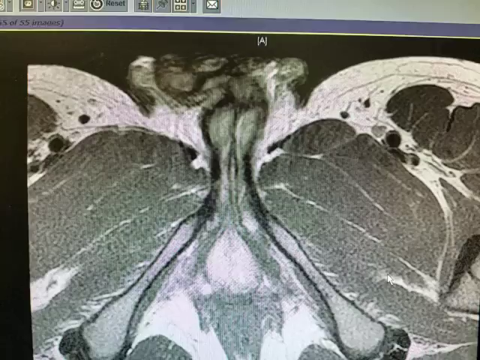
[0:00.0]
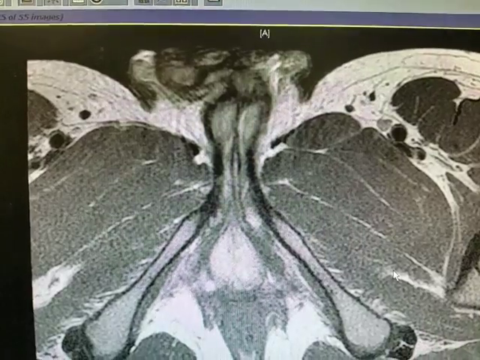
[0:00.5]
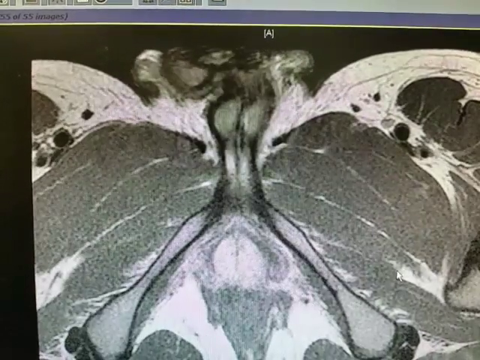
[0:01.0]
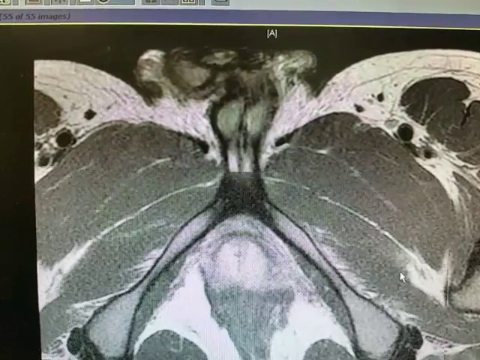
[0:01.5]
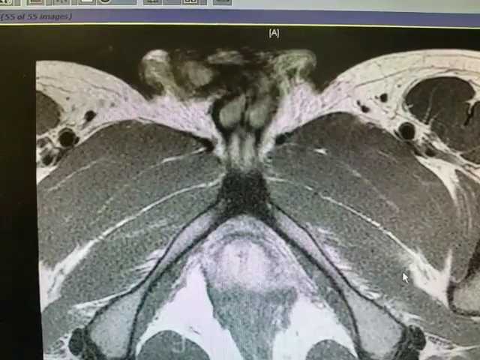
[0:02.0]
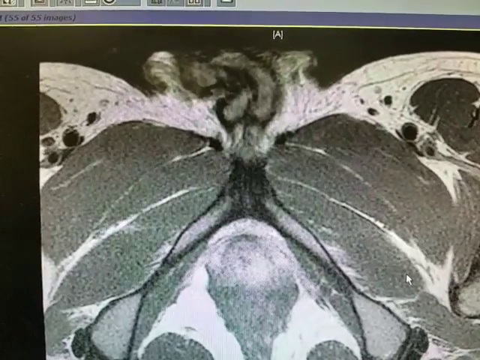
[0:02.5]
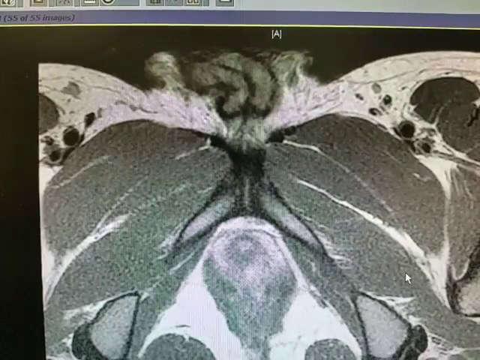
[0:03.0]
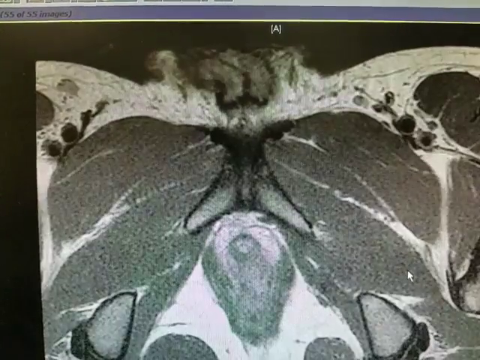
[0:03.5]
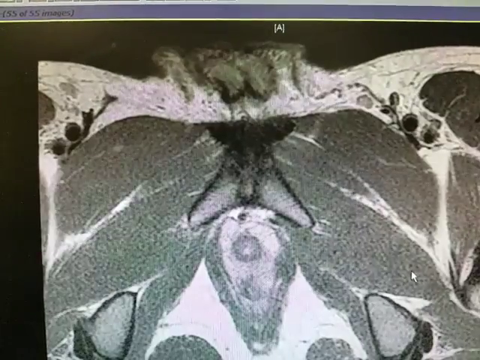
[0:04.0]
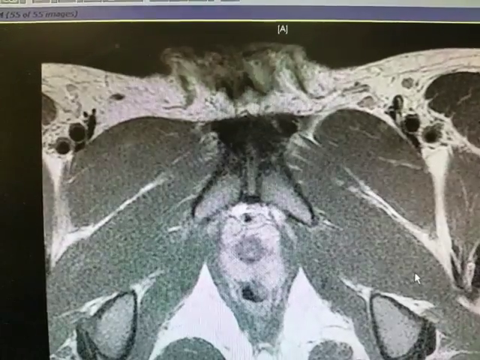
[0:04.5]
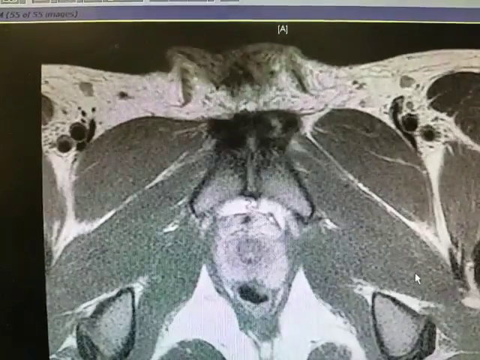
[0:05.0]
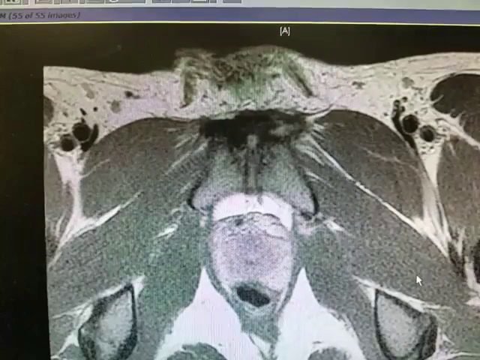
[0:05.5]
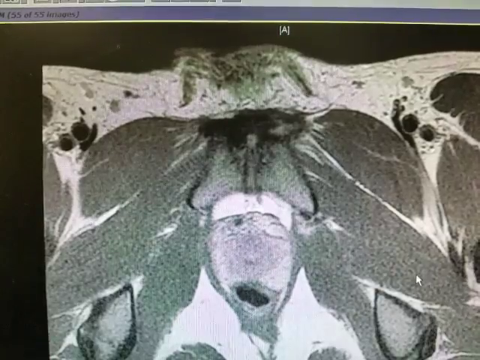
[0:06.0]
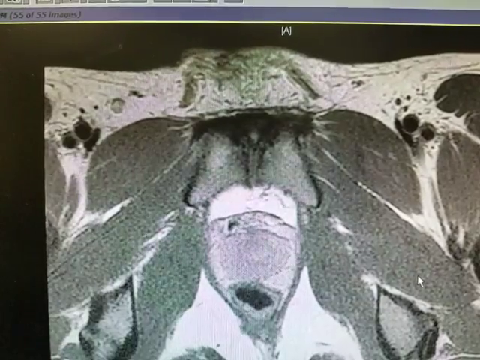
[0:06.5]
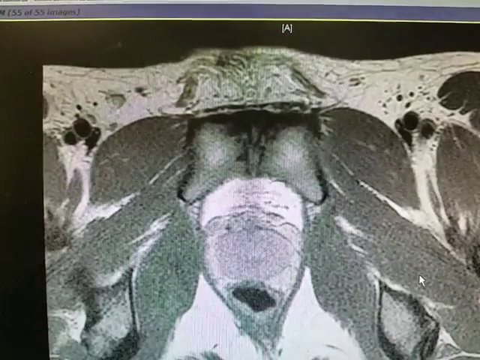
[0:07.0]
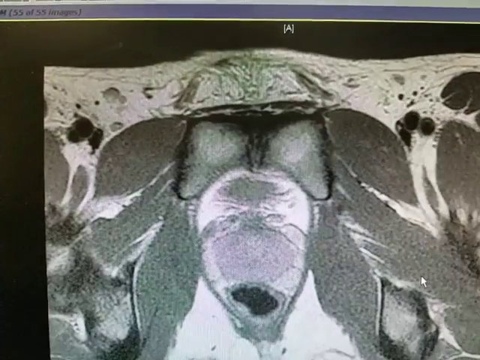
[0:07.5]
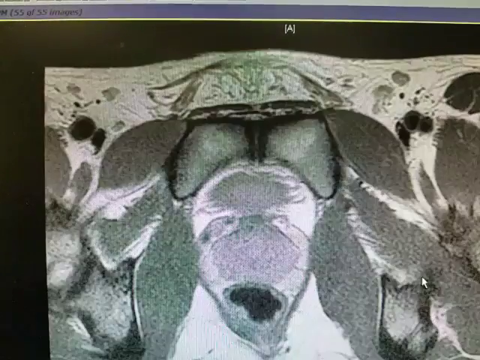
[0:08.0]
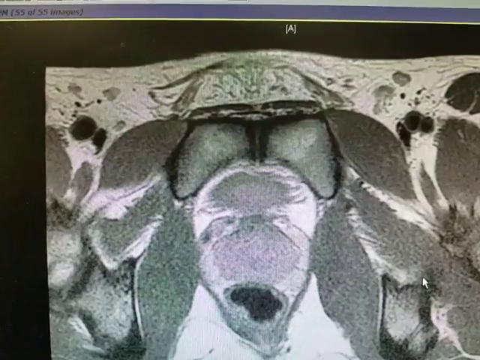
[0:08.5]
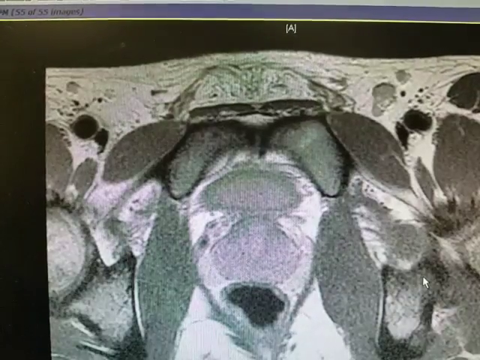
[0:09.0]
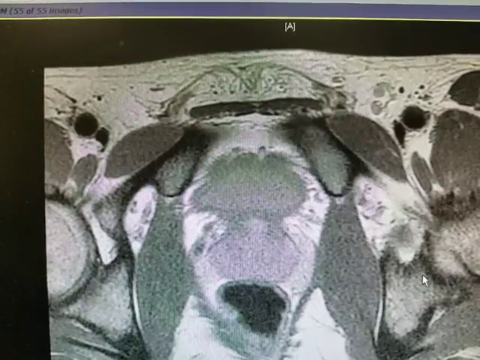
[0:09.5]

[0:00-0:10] Some type of medical imaging is shown, possibly an MRI or a CT scan. It is not an X-ray, as bones are not really visible in the image. There appear to be organs in the images. The top left corner reads "55 of 55 images." The images change, apparently showing changes occurring within the body. The organs, or whatever they may be, move drastically and almost get compressed together, which looks abnormal. The images are in black and white, and the video is evidently being taken of a screen.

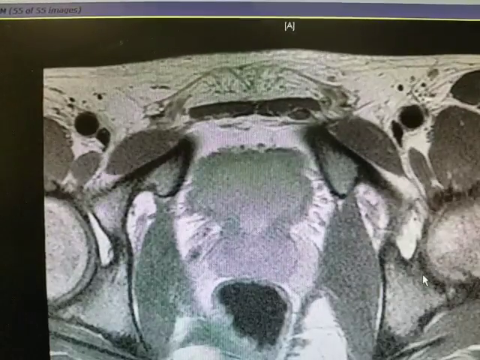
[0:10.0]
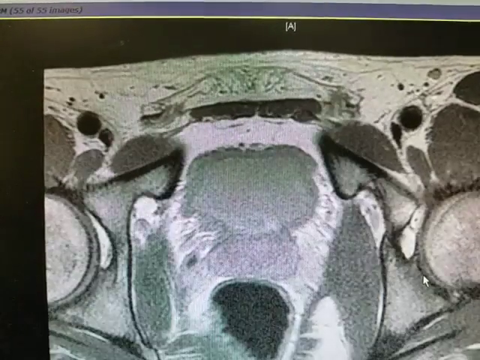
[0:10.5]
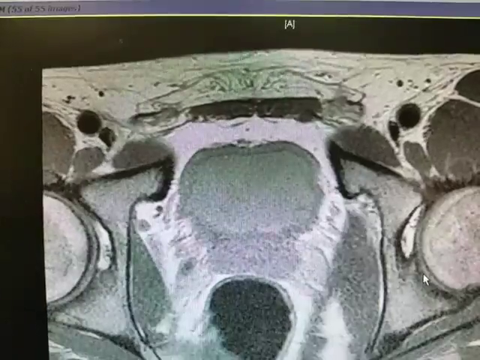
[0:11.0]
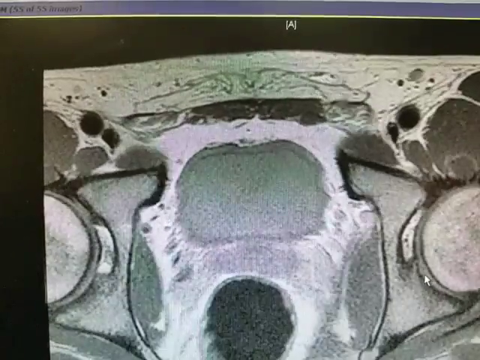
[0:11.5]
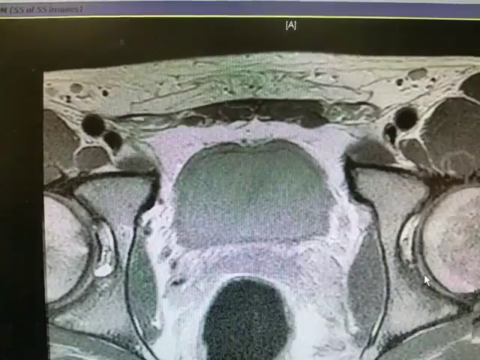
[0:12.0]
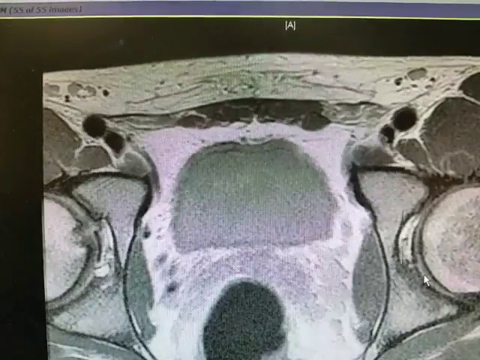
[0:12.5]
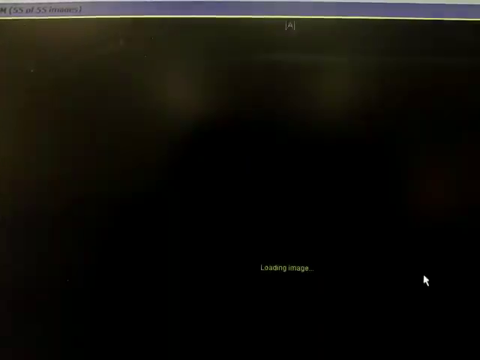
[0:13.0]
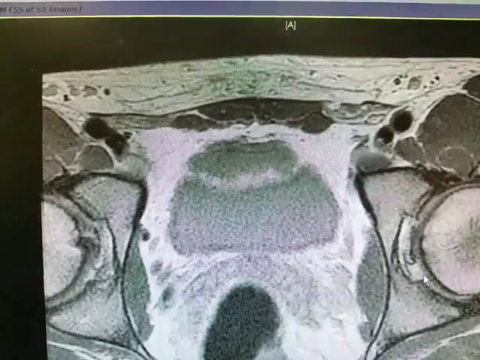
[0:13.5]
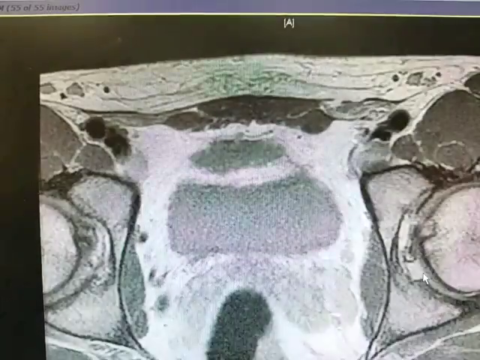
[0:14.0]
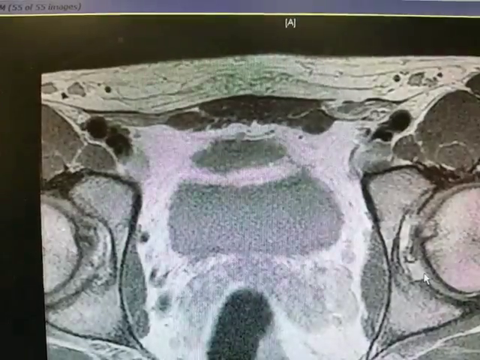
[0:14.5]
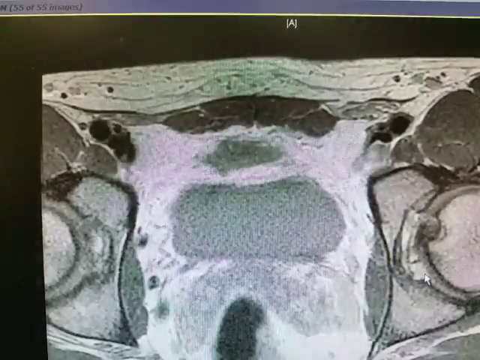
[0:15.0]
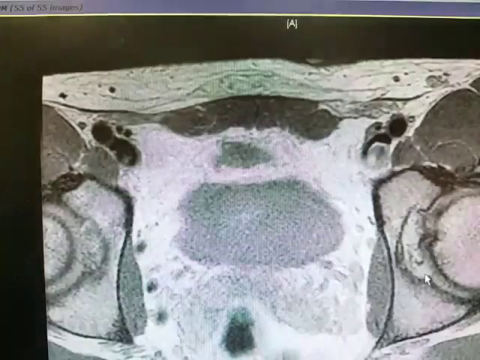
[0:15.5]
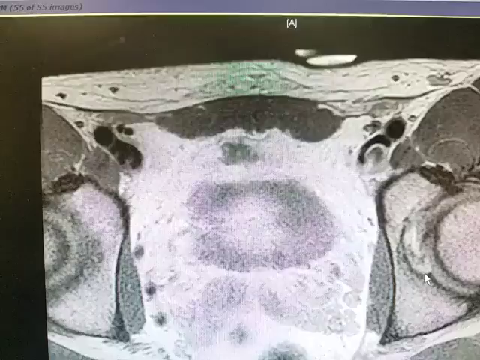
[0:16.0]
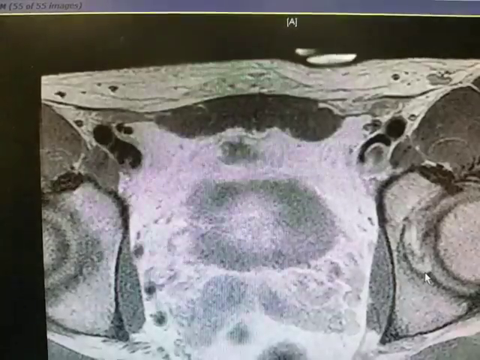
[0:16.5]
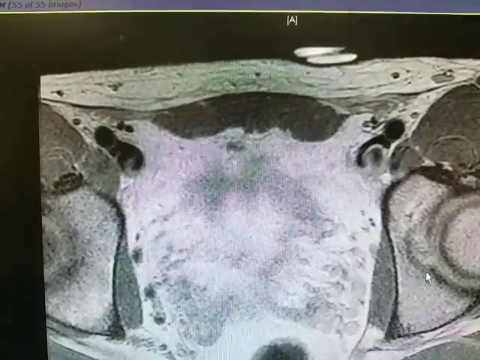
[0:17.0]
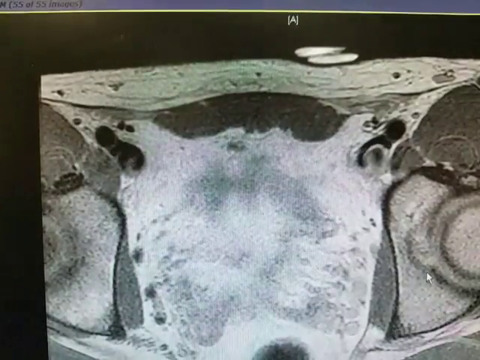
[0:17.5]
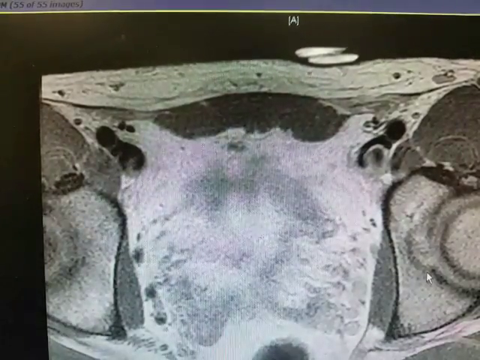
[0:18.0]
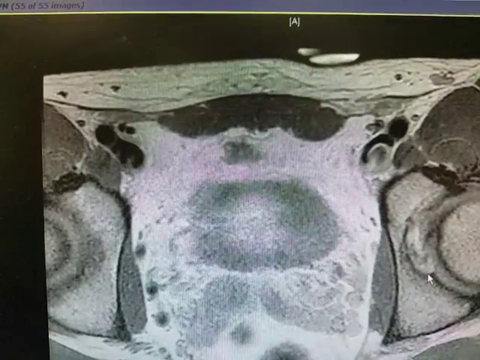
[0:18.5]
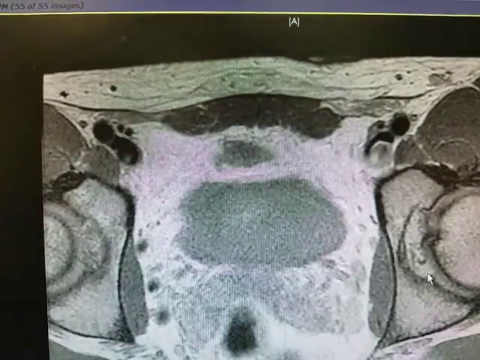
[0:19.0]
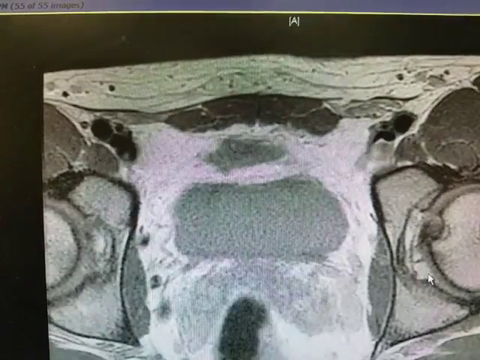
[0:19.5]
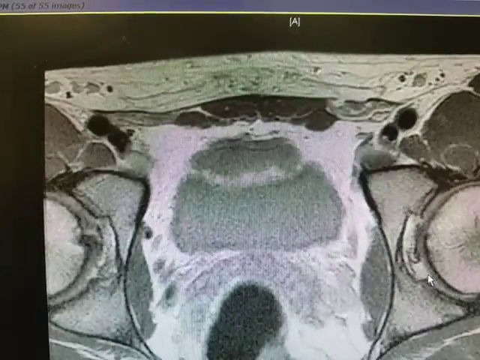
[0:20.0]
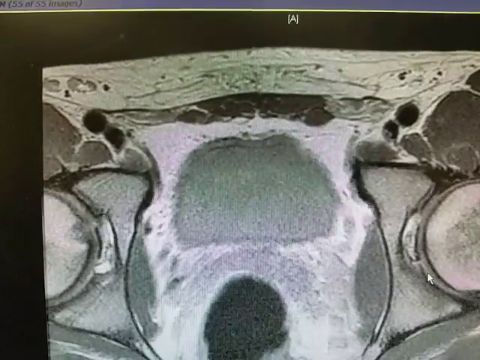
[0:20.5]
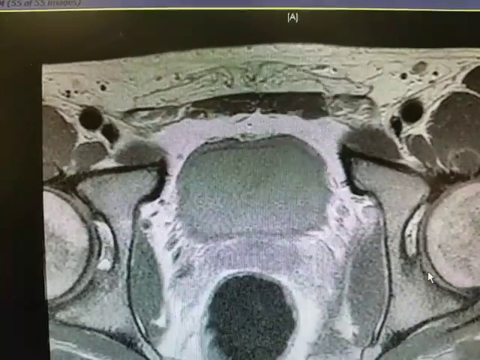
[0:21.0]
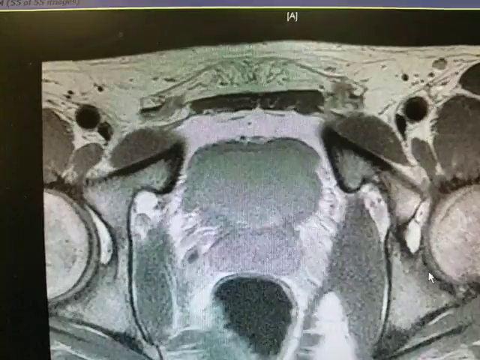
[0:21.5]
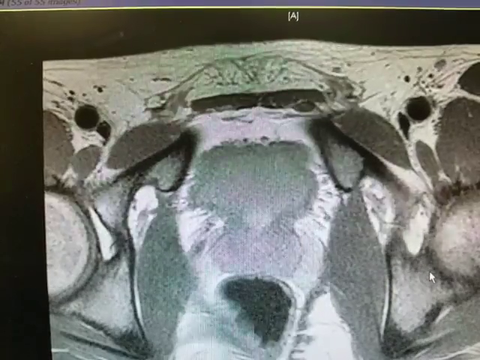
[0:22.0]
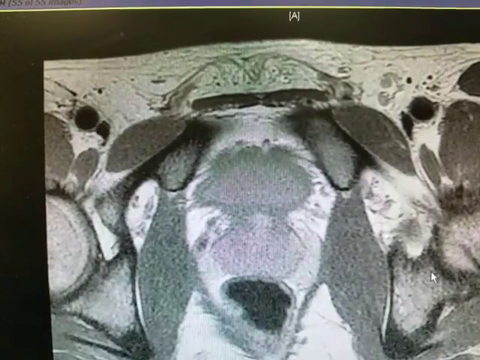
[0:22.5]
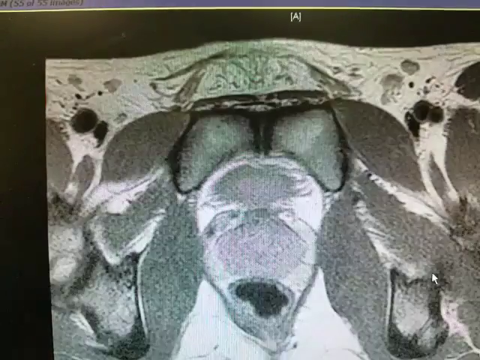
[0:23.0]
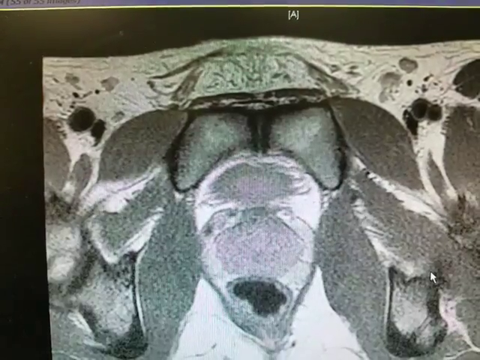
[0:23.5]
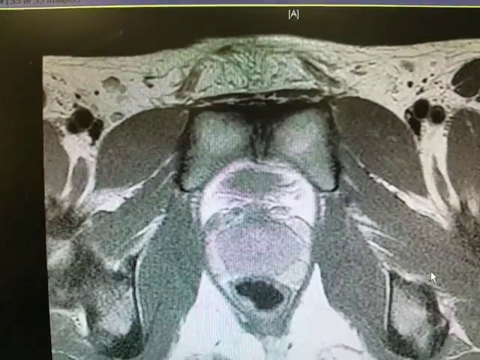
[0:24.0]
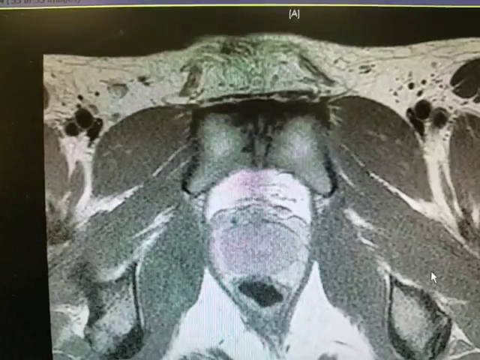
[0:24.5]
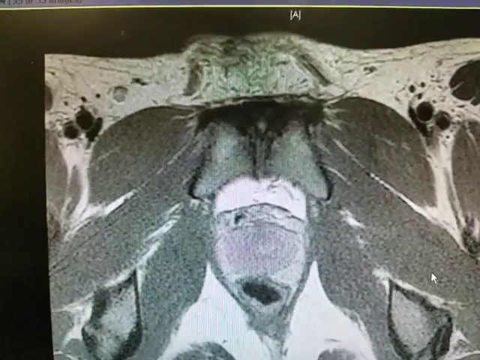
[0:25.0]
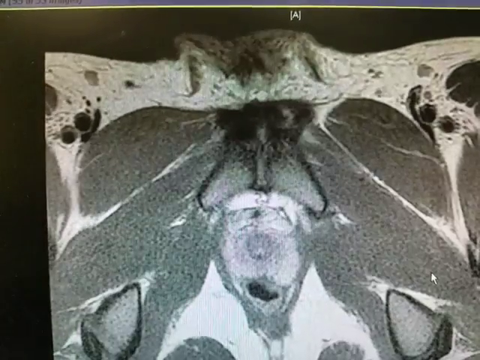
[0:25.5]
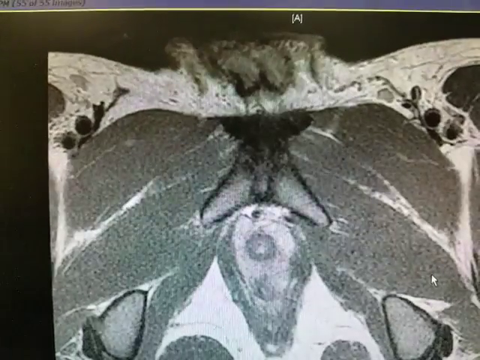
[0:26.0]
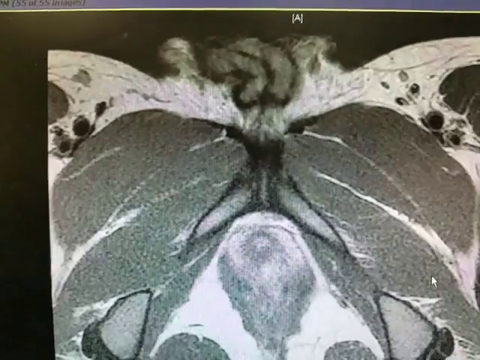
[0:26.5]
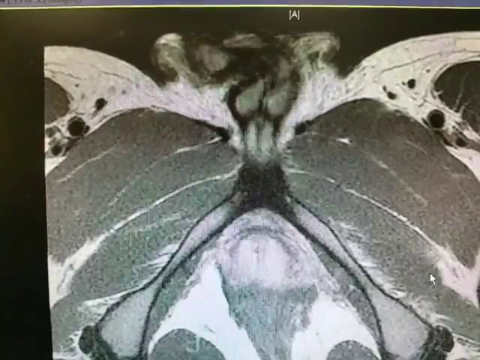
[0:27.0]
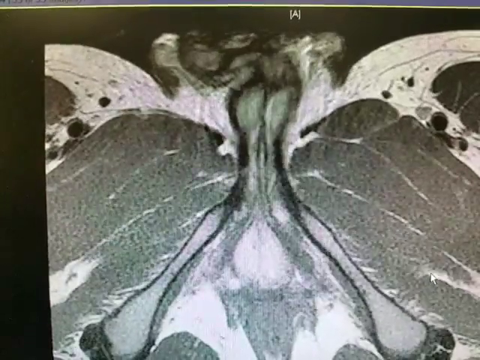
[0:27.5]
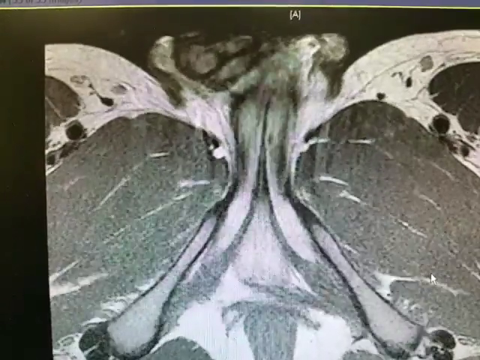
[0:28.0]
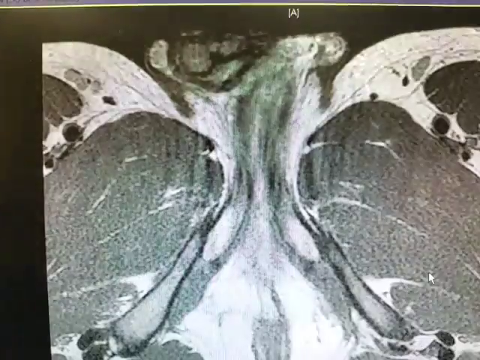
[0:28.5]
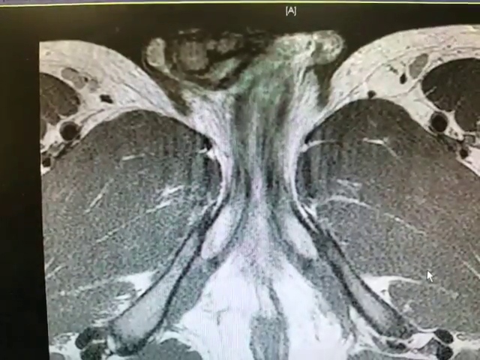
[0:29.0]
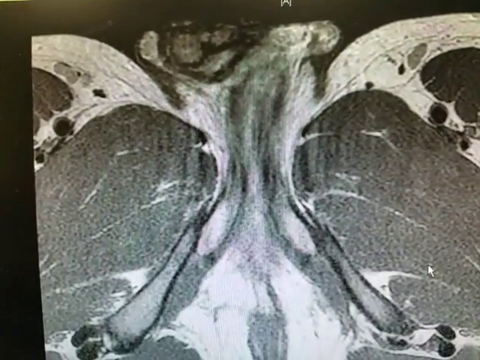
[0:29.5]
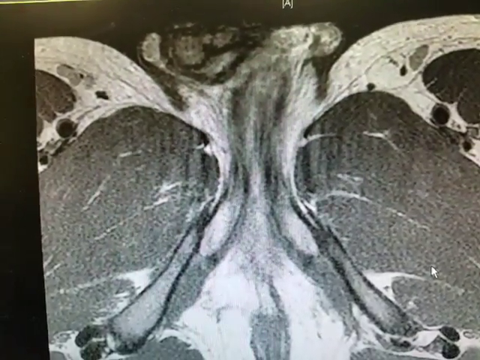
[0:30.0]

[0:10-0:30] The images change more slowly, and the display kind of flashes repeatedly, about four to five times, on the same image. It then slowly starts to change again, kind of going into itself. The result looks like a weird design, almost like an art project in which metallic colors or paint are put into water and the moving water creates a strange image. It is unclear whether a spleen or kidneys are shown, but there is movement, and very many images of the process appear to have been taken. These are medical images of what is apparently a human body, though it is unclear whether male or female.